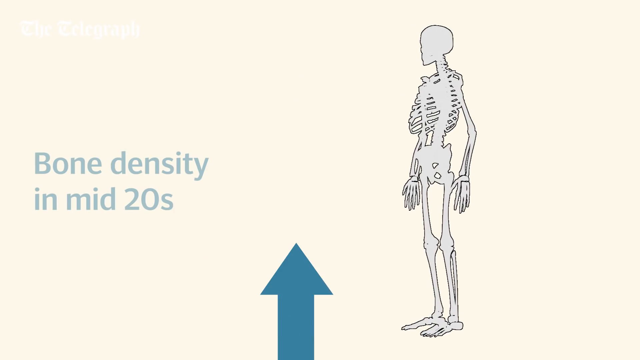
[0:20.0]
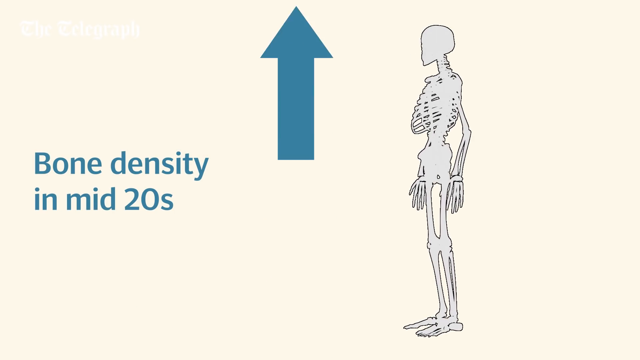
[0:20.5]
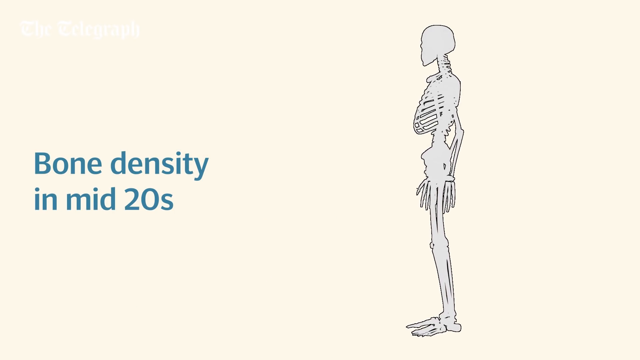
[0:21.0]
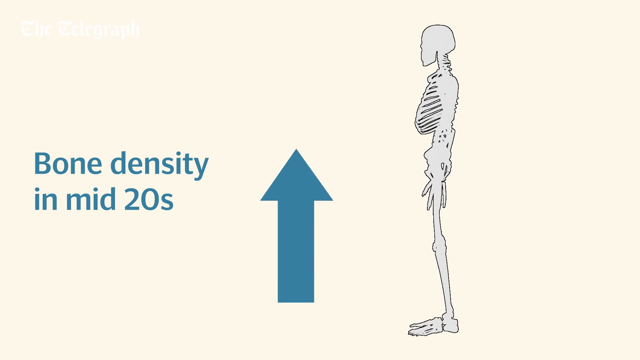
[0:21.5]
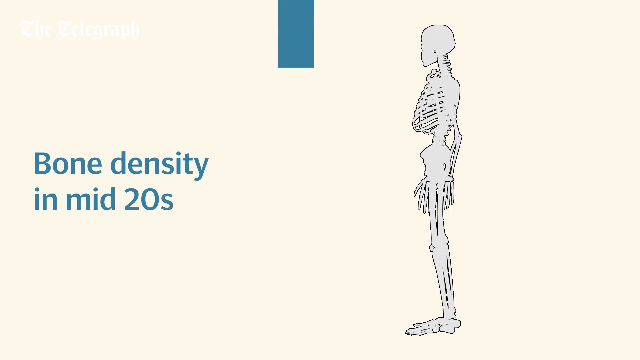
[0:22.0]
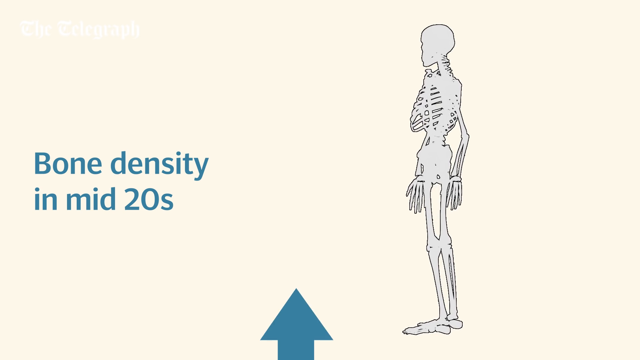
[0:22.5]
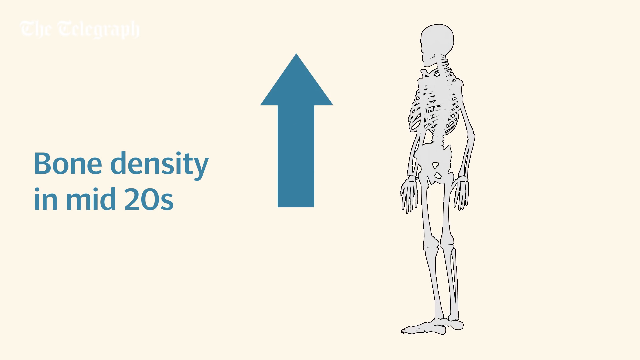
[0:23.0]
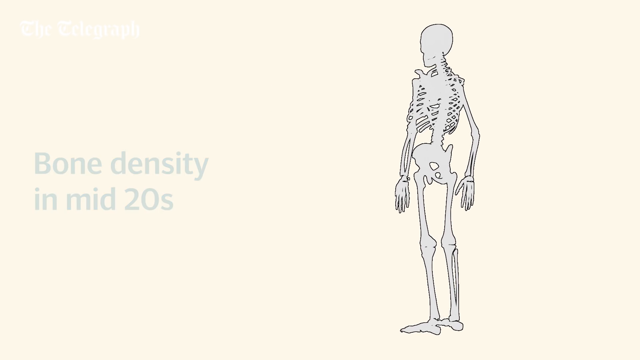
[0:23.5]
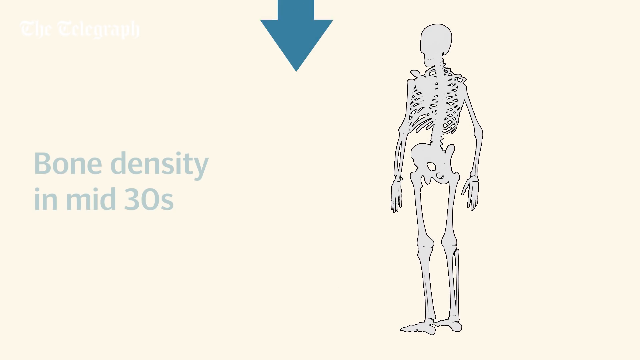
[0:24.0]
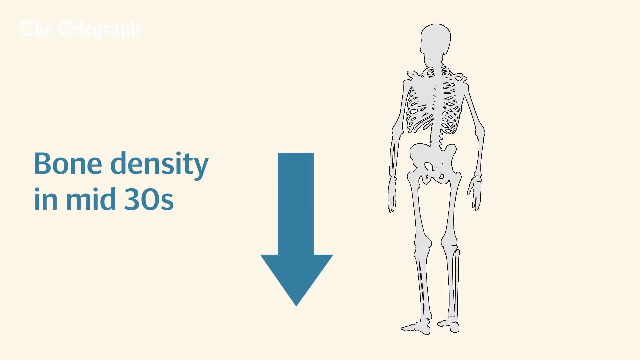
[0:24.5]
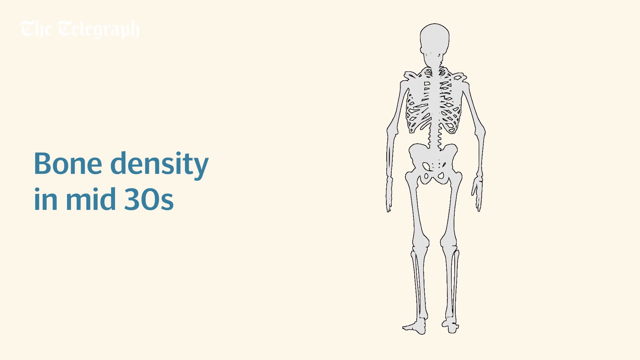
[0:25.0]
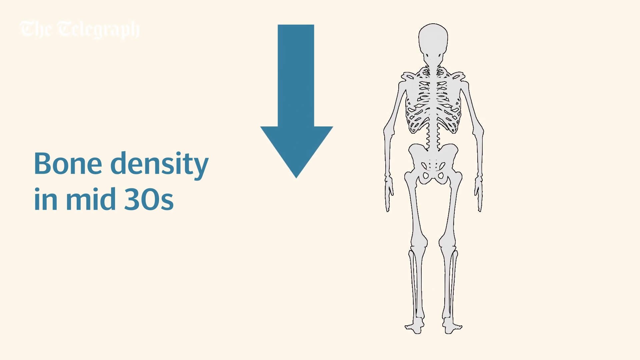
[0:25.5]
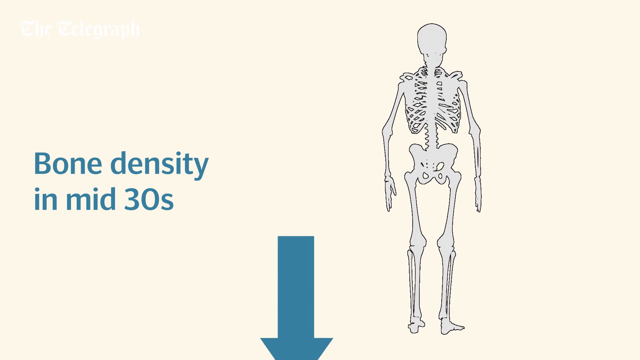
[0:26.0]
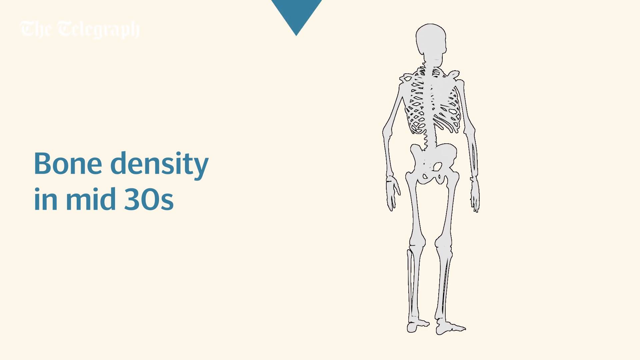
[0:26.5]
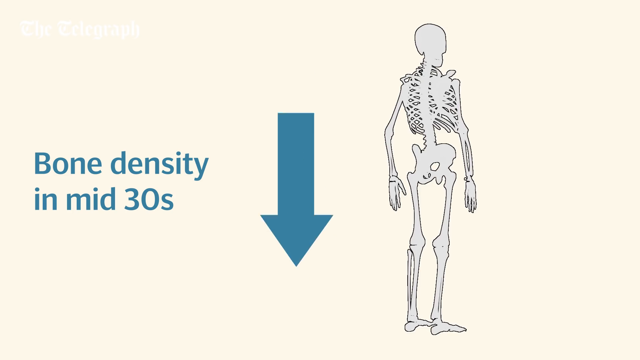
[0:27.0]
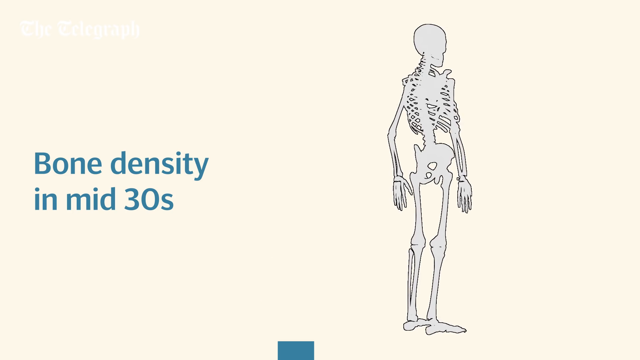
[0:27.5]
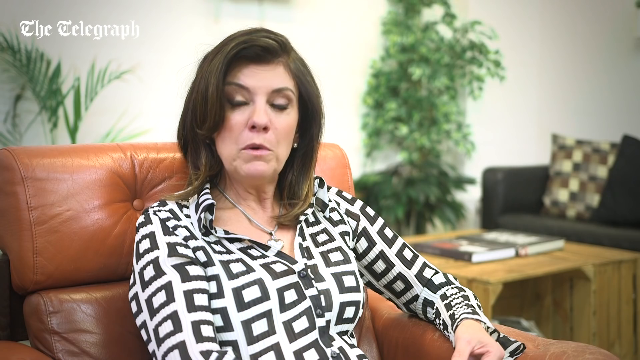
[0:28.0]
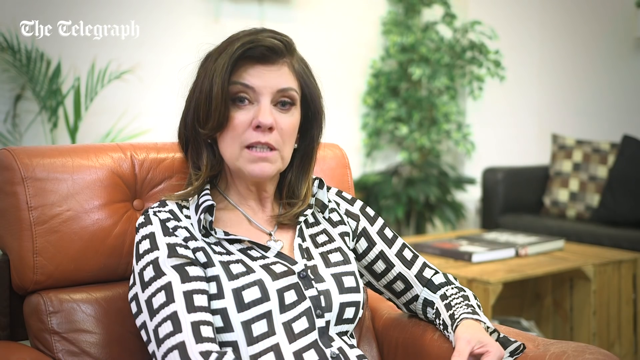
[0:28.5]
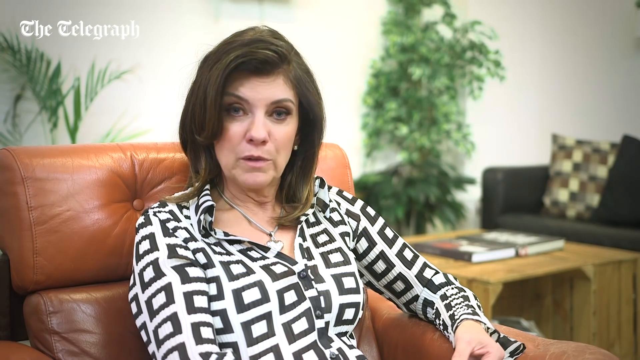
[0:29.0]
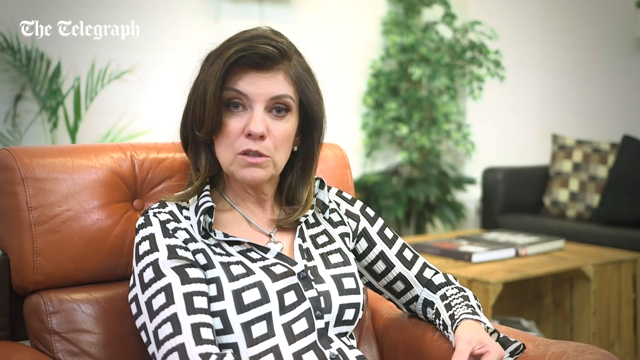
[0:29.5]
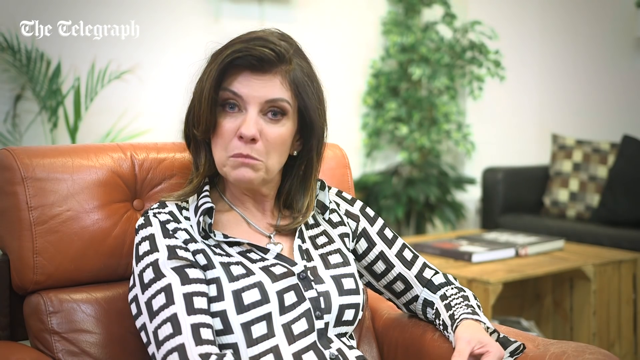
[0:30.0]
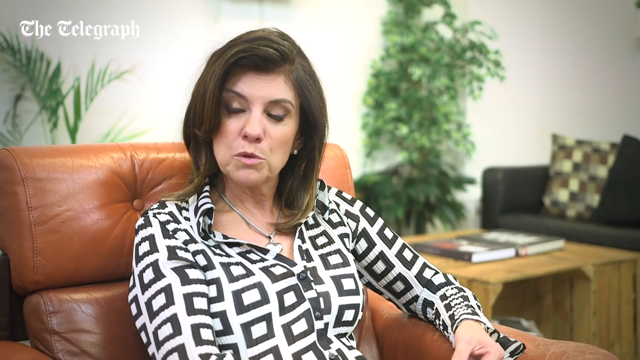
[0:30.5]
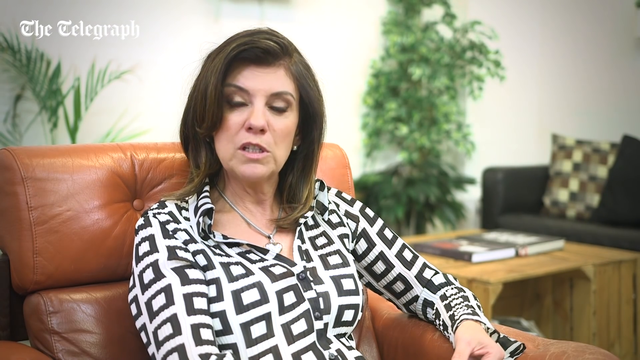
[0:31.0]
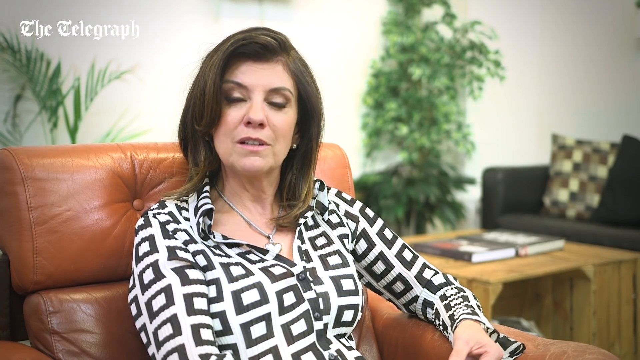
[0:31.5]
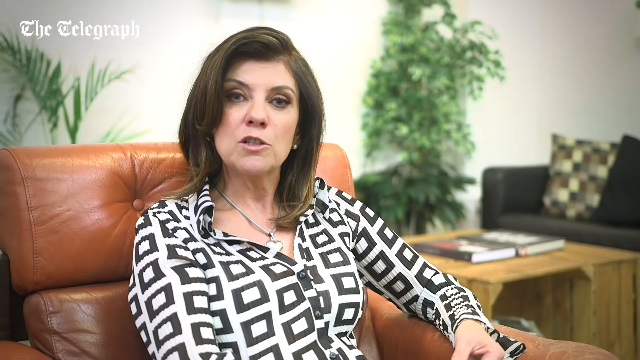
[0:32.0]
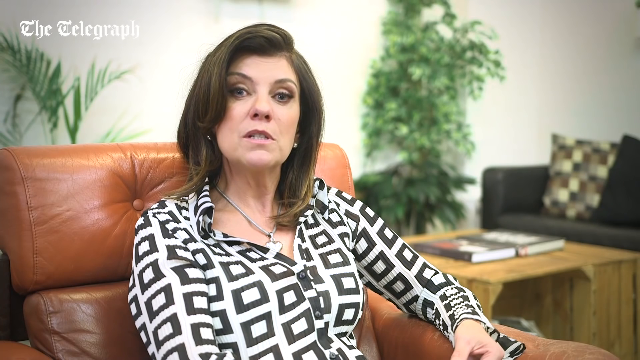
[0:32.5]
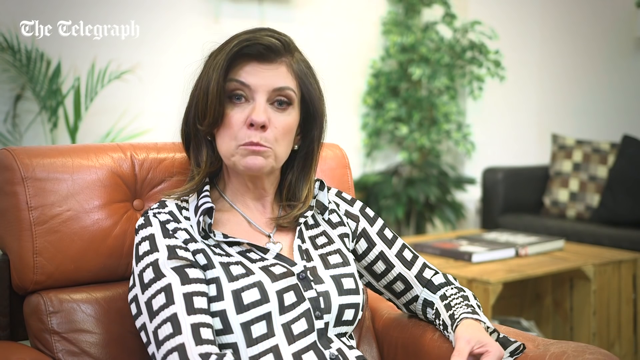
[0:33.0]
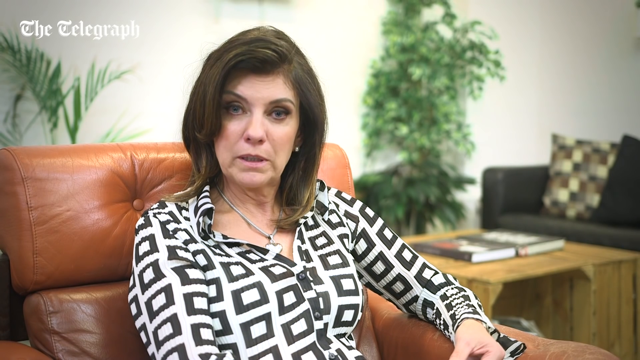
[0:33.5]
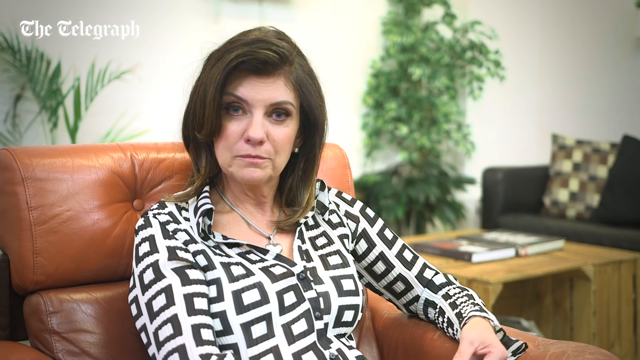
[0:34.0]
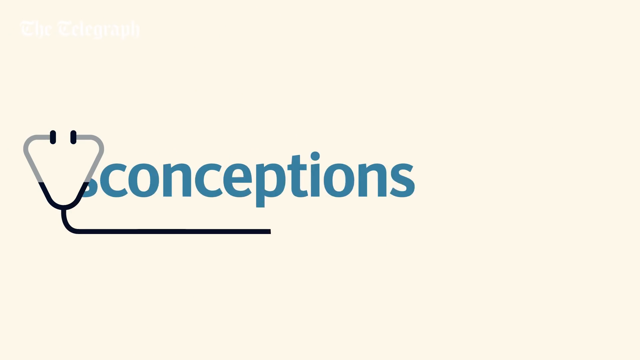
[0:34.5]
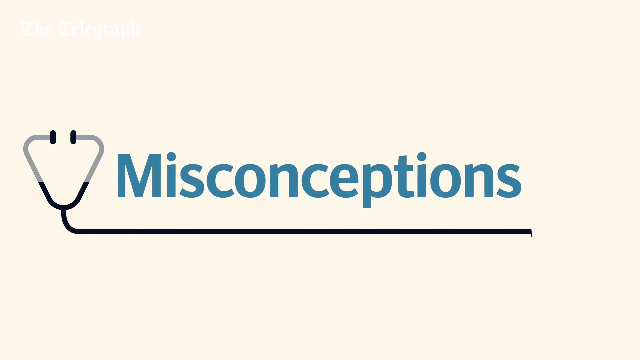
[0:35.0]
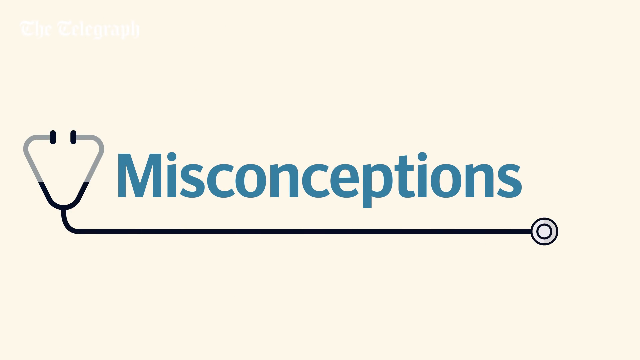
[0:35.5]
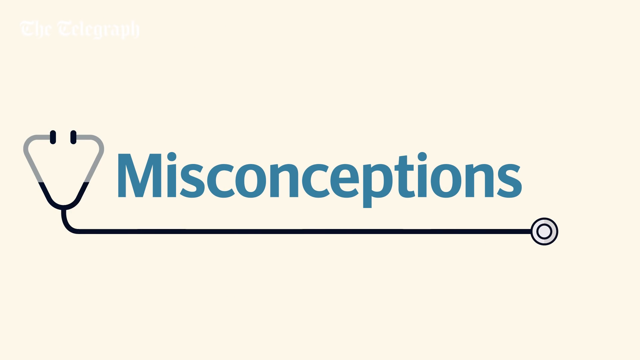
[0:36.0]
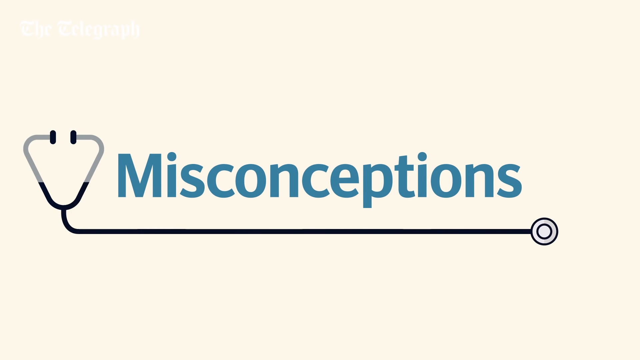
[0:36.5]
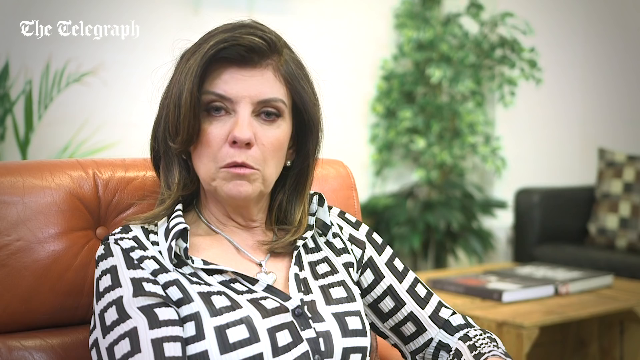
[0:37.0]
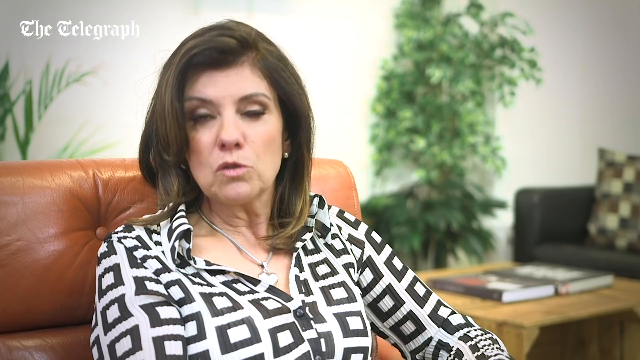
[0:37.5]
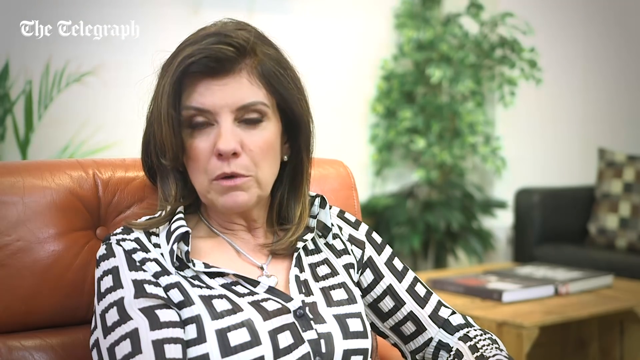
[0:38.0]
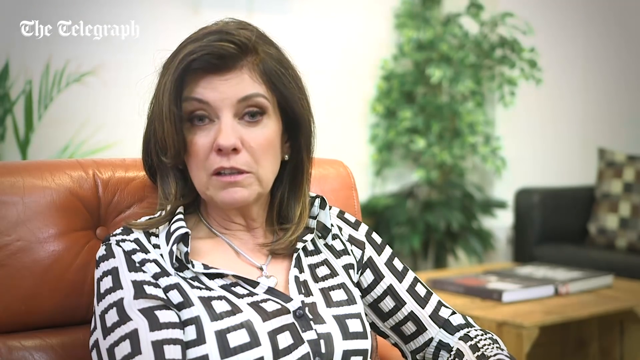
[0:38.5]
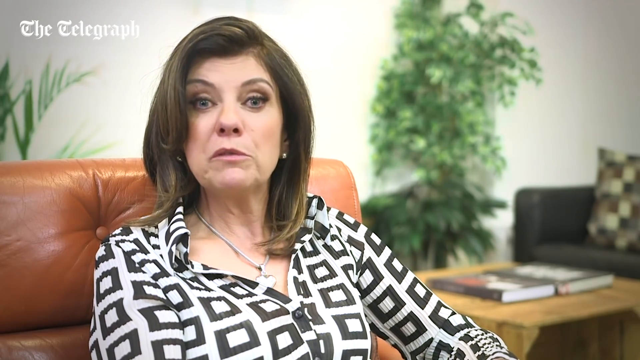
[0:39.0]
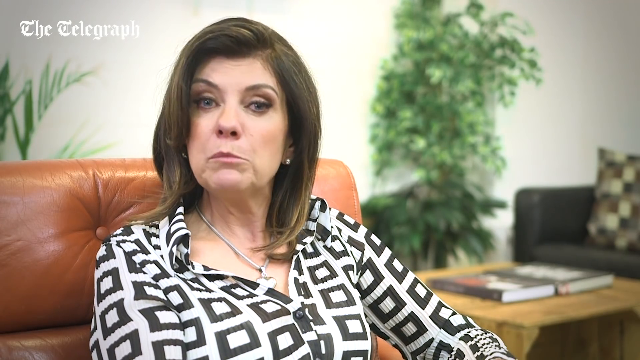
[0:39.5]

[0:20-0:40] A grey skeleton with a black outline is on the right-hand side of the screen, turning clockwise. A blue arrow appears from the bottom of the screen and moves to the middle, while blue text on the left-hand side reads "bone density in mid-20s". The arrow shoots up off the screen, then reappears at the bottom and shoots up again, repeating as the skeleton keeps moving, now in an anti-clockwise direction. The text on the left then reads "bone density in mid-30s", and this time the arrow goes from the top of the screen to the bottom, apparently to show that bone density decreases. The doctor appears back on the screen, relatively zoomed in so that she is visible only up to about her waist as she sits on the leather chair, speaking. The stethoscope then appears and its bottom part shoots out to the right to underline the new title, "misconceptions", written in bold blue text, before the doctor appears back on the screen speaking.